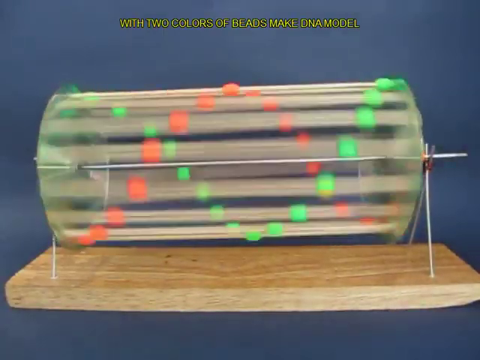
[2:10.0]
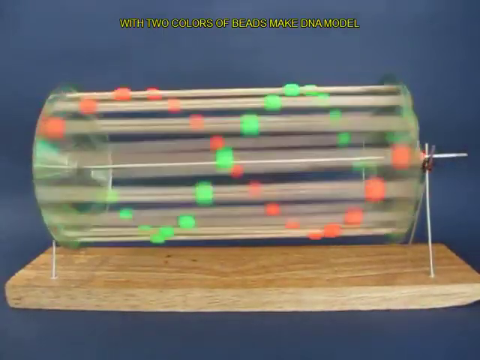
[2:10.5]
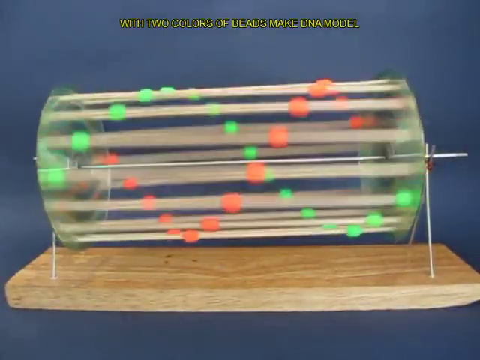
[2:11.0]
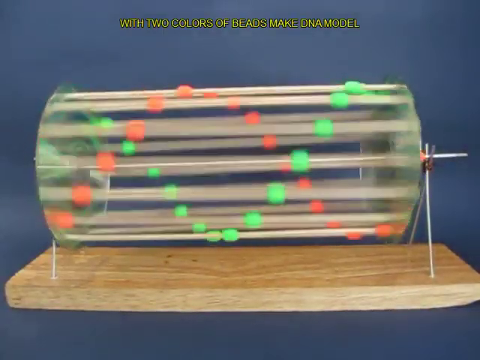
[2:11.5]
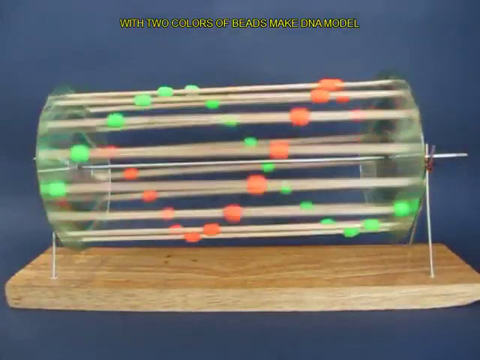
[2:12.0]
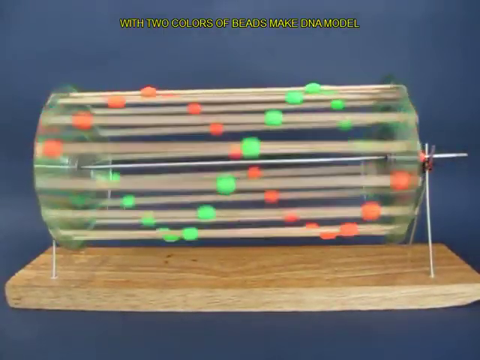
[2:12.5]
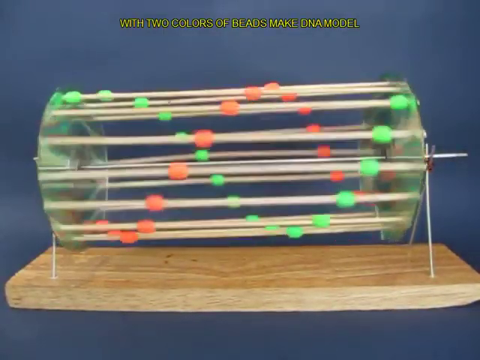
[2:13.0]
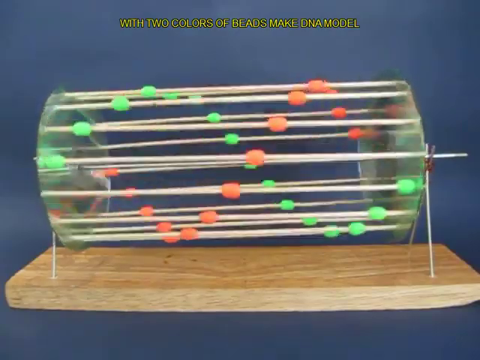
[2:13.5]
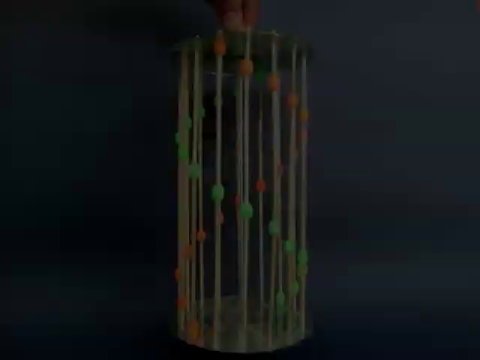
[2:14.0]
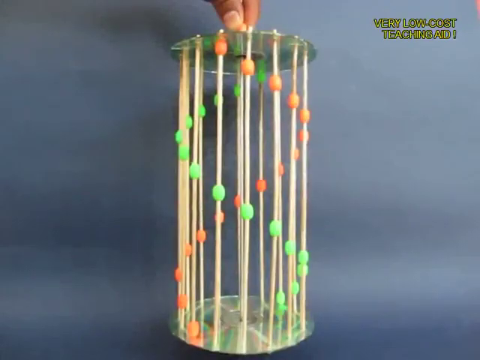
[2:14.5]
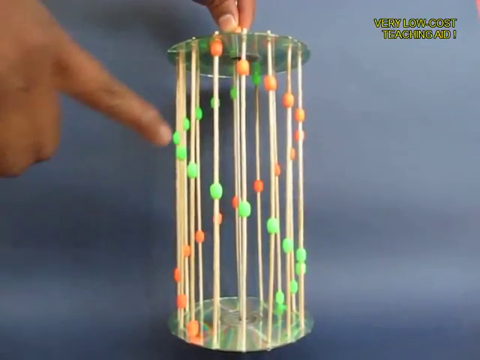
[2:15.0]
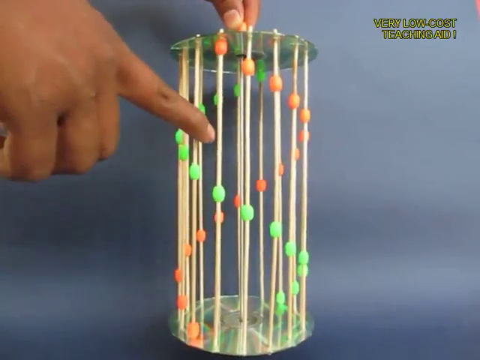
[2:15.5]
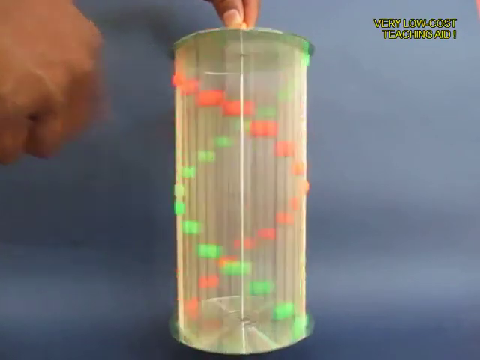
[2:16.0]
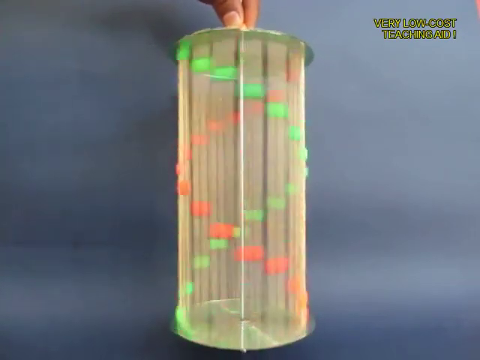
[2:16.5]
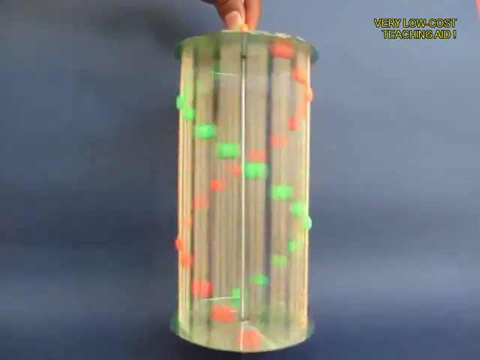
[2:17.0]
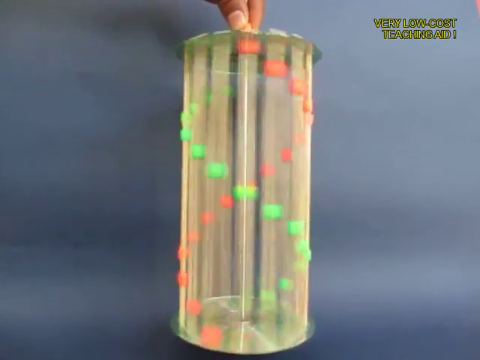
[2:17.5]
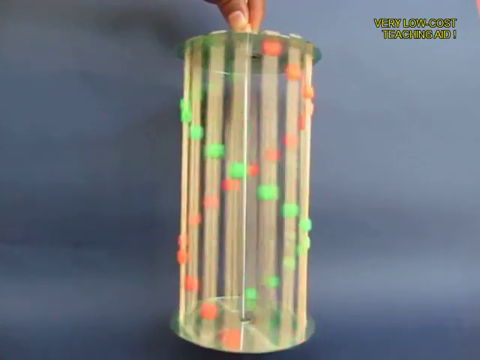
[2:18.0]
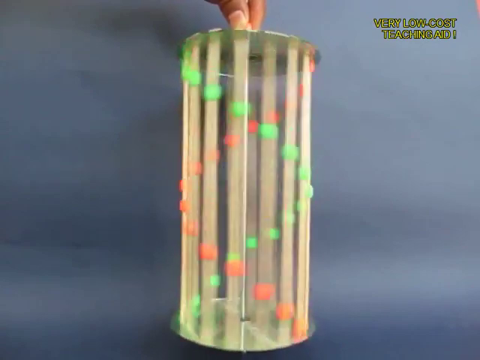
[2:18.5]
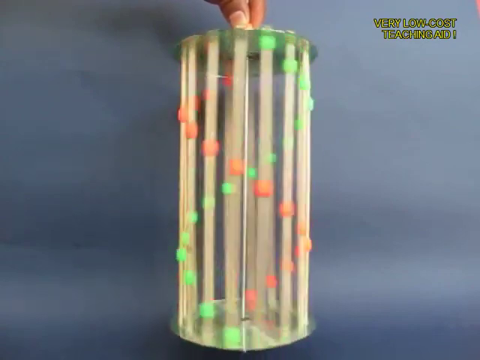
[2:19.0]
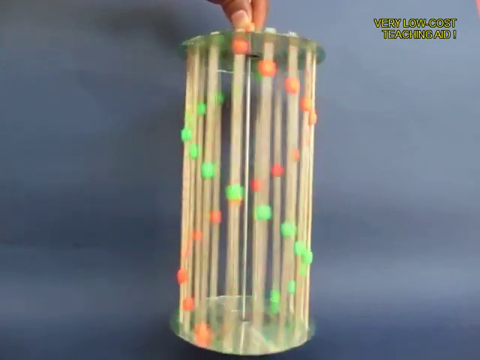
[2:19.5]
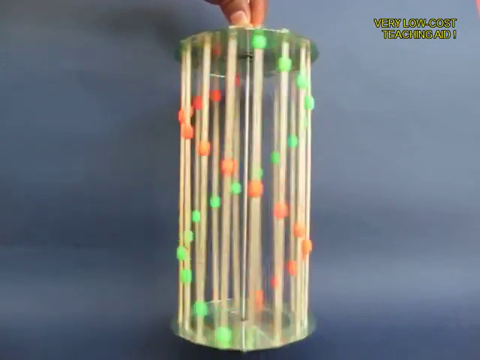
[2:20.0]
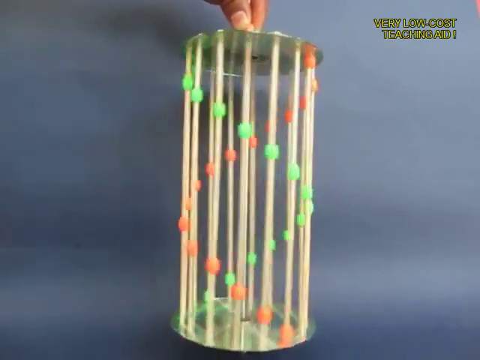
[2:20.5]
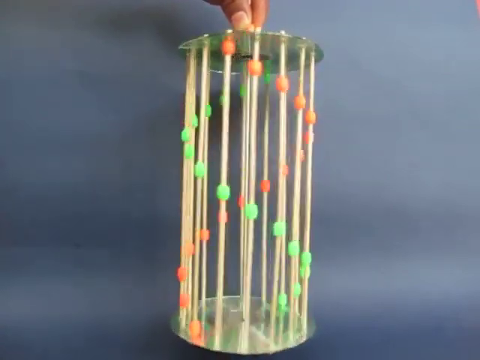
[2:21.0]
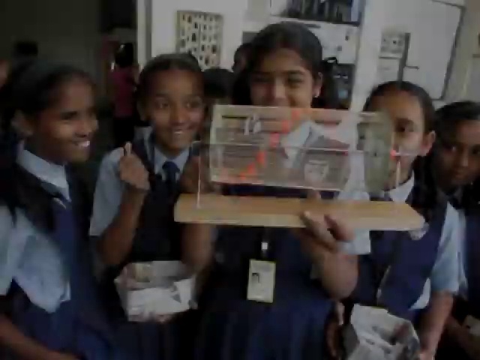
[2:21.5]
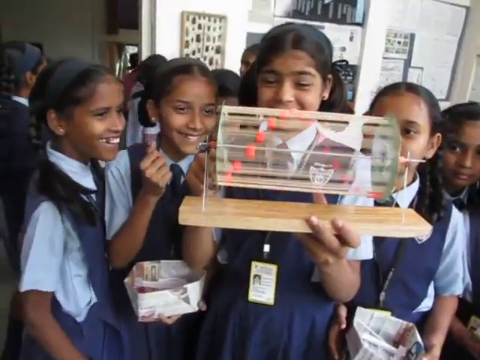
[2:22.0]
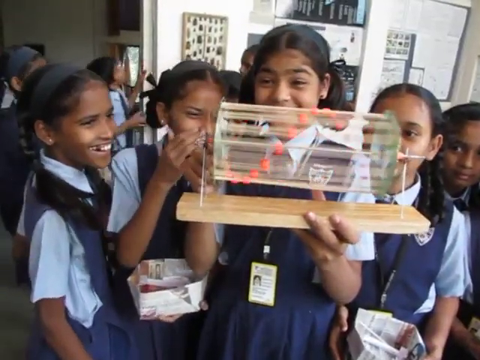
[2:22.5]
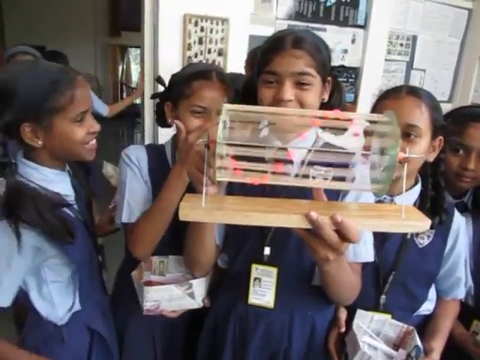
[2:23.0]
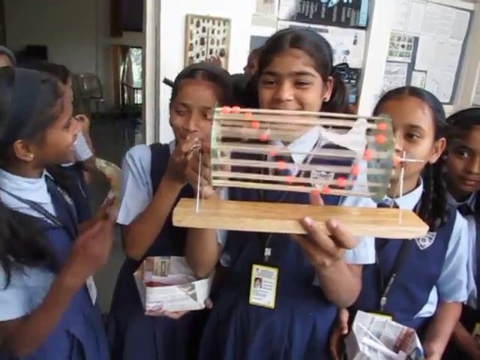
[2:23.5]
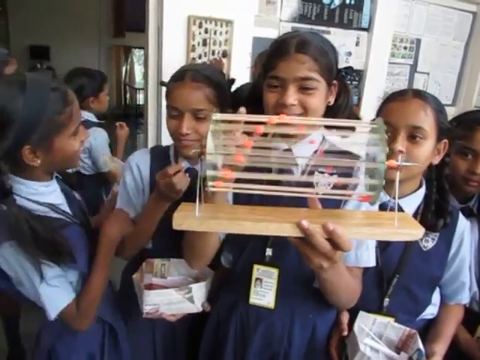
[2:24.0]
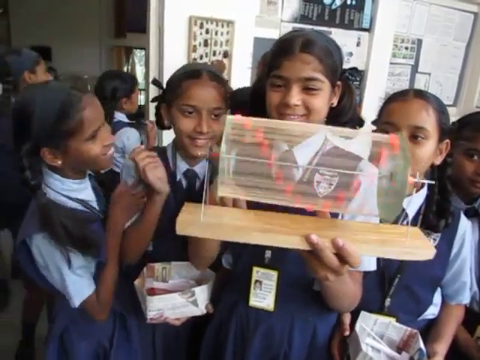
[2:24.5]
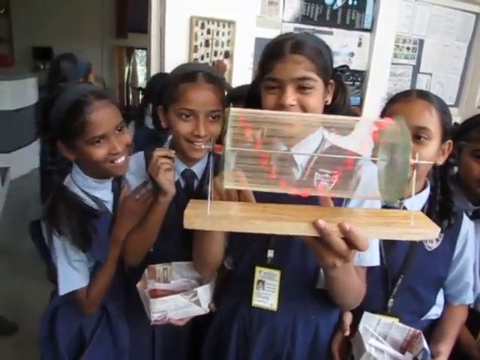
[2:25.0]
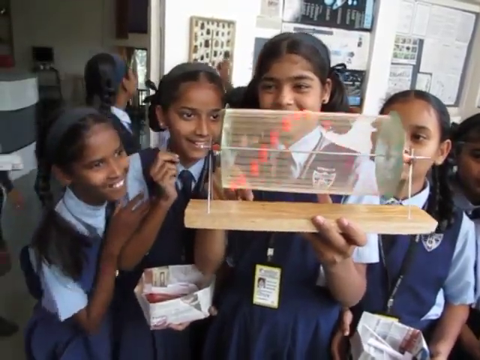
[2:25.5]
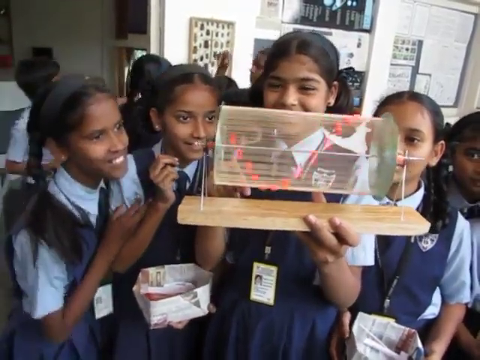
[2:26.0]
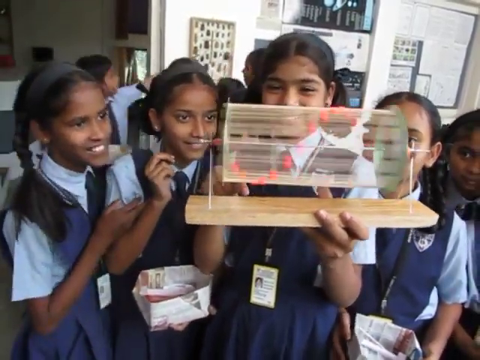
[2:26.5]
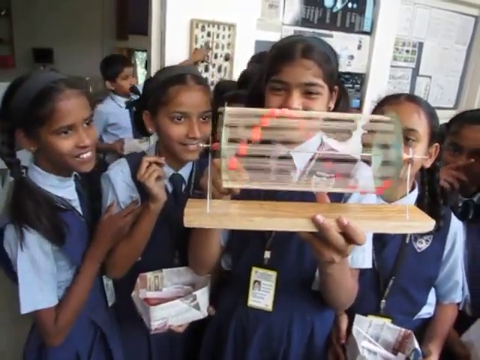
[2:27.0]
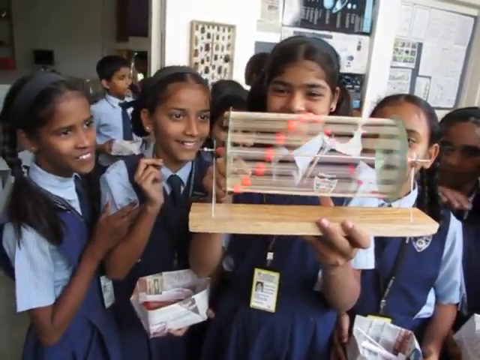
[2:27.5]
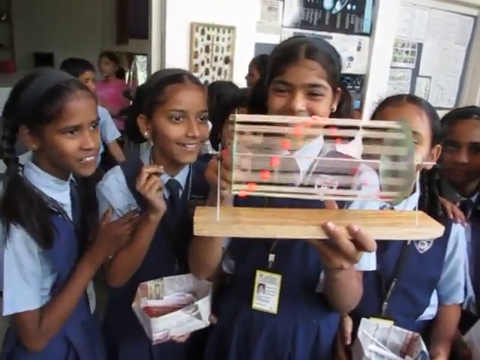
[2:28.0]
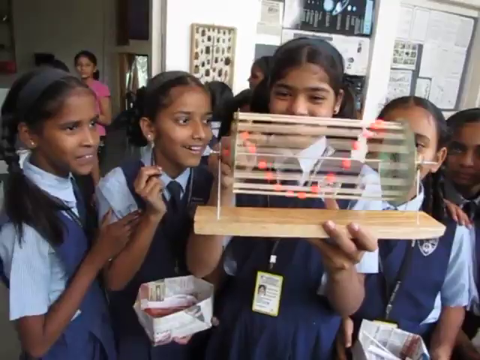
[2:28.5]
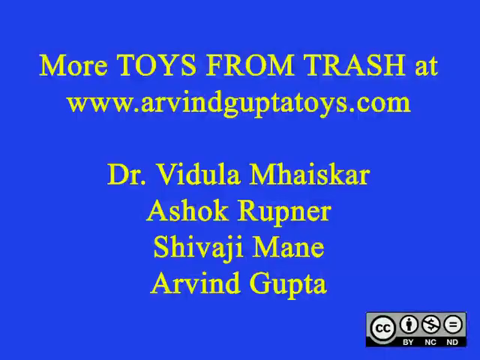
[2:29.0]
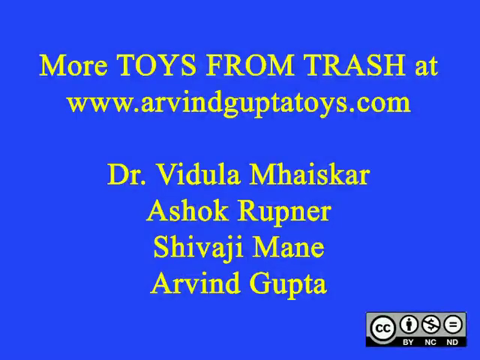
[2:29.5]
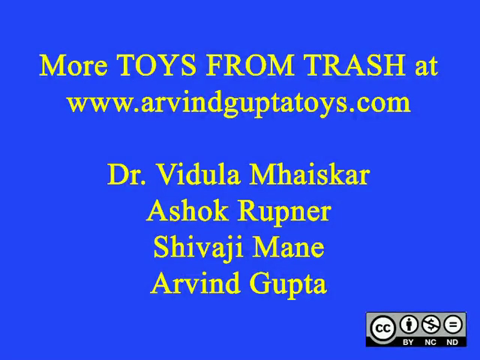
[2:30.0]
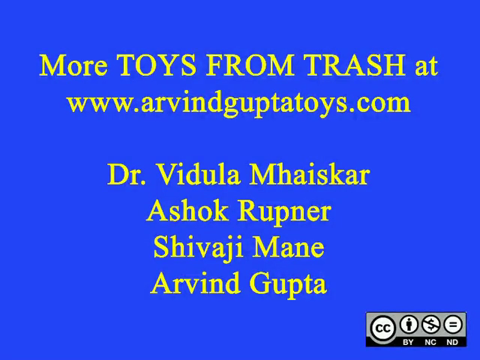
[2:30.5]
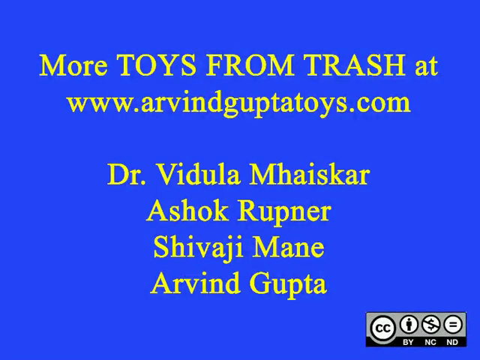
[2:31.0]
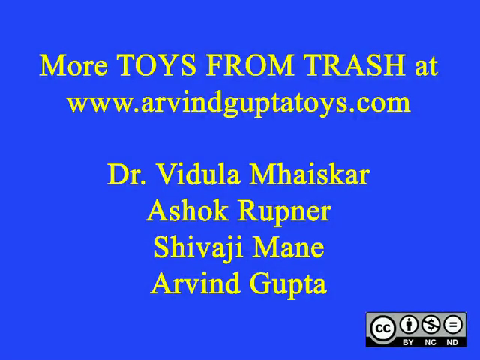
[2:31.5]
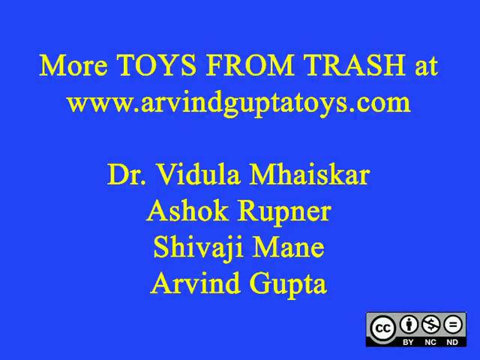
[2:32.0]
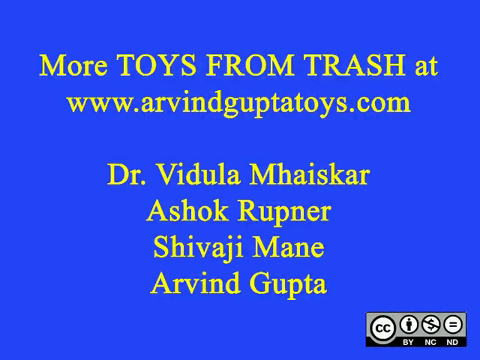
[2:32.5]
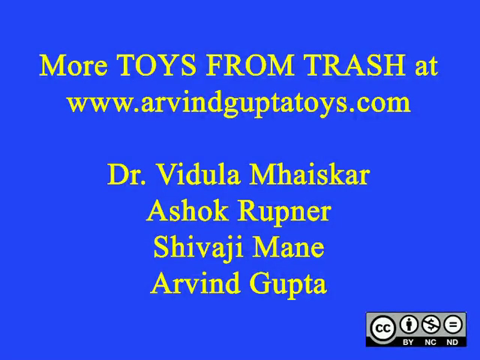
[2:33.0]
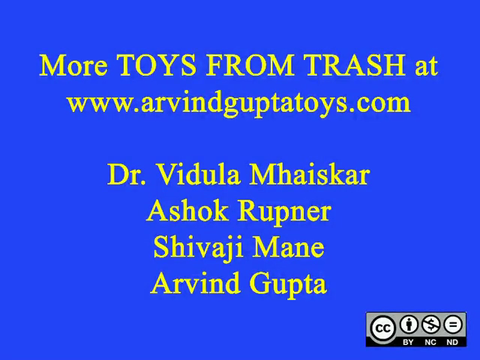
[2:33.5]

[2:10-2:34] Against a navy blue background is the completed wave structure, which now has green beads added to it, making a DNA-like model. It sits on a wooden board with metal spokes that hold the metal rod, letting the CD structure keep spinning. The teacher slows it down and lets it go in slow motion to show better what it does. He picks up the model again and points at different areas of it before spinning it, with his other hand holding it downward as the orange and green beads oscillate around each other in a DNA-like pattern. In a different scene, a group of girls hold the wooden model and watch it spin, speaking to each other and appearing quite fascinated by the little toy. The outro follows, inviting viewers to go to a website for more ideas for making toys from trash, with yellow writing on a blue background.